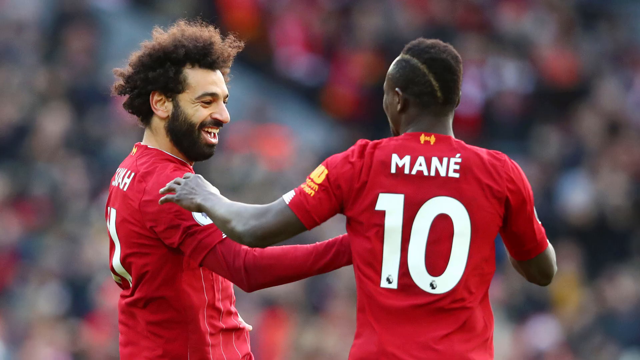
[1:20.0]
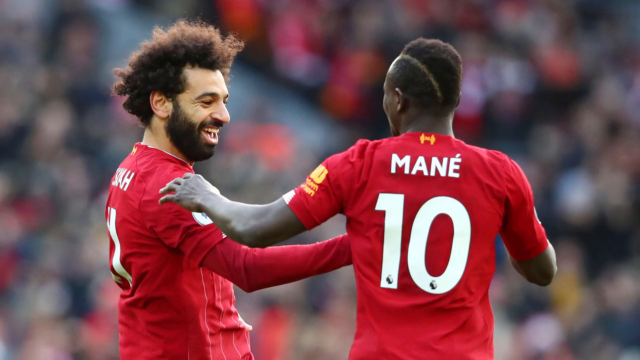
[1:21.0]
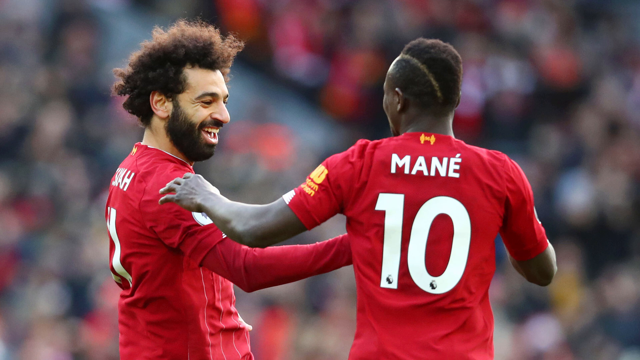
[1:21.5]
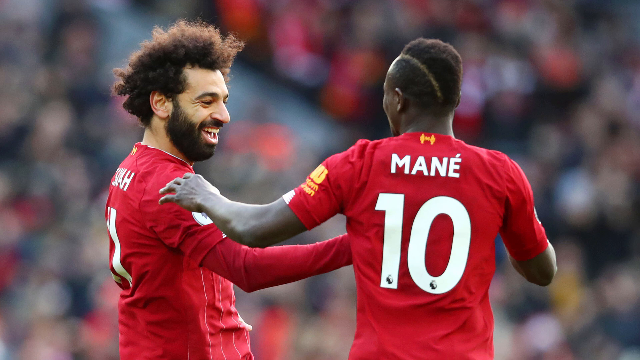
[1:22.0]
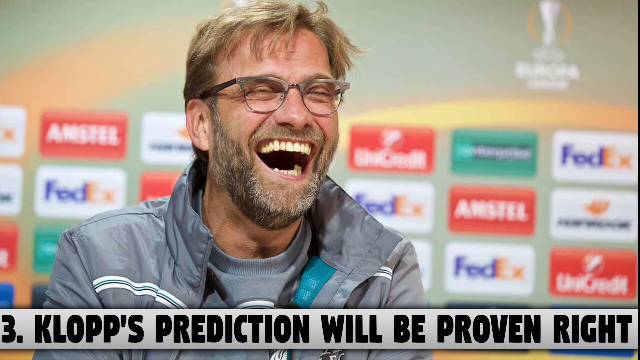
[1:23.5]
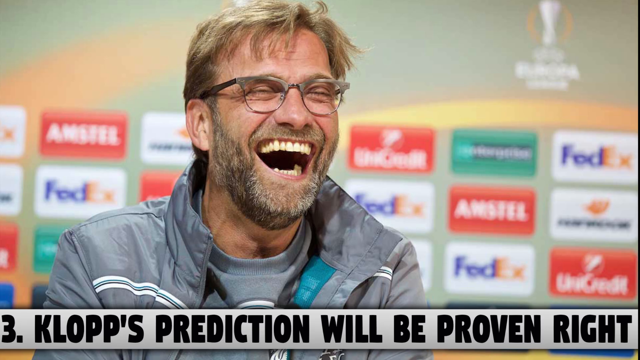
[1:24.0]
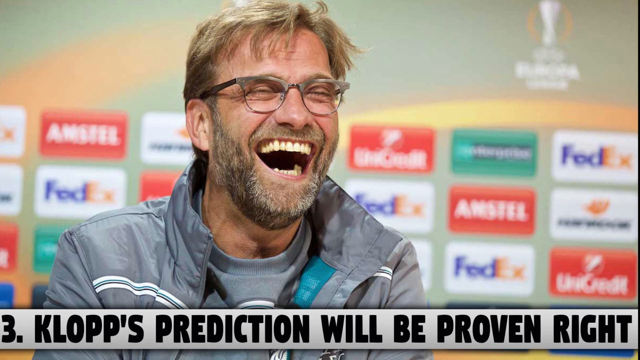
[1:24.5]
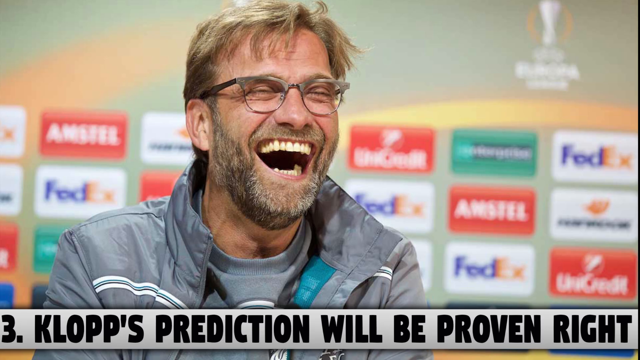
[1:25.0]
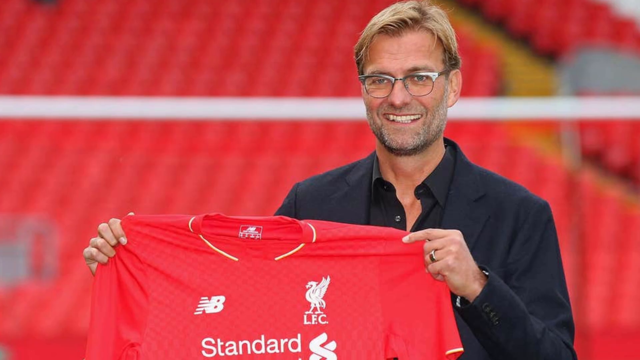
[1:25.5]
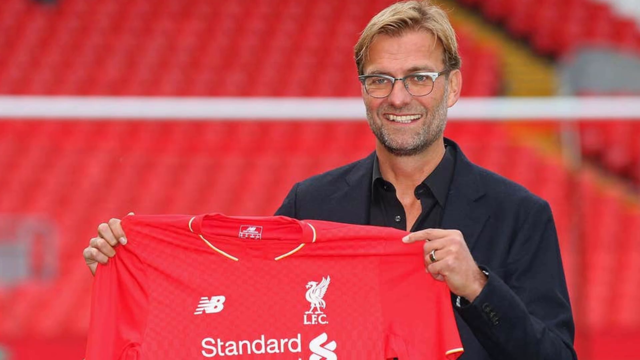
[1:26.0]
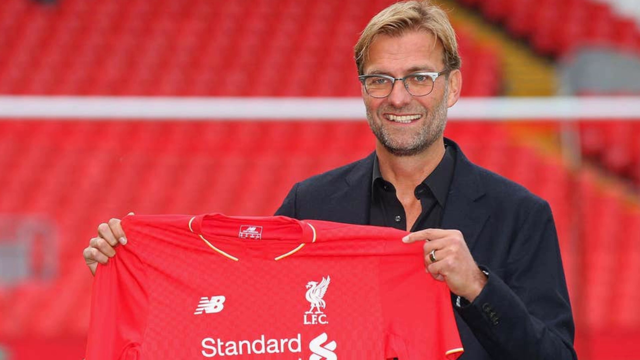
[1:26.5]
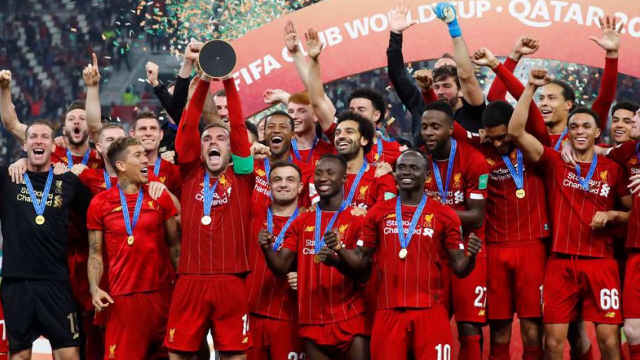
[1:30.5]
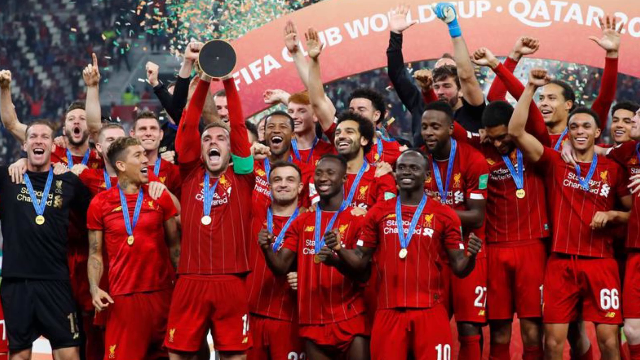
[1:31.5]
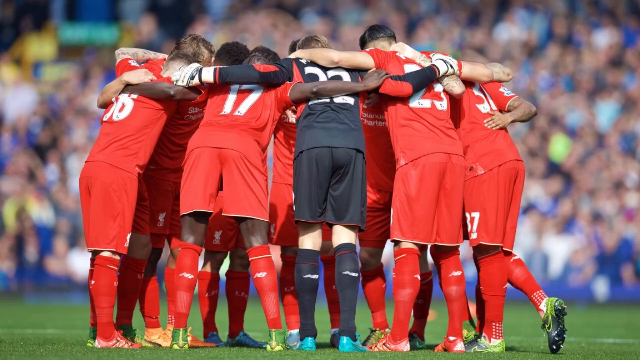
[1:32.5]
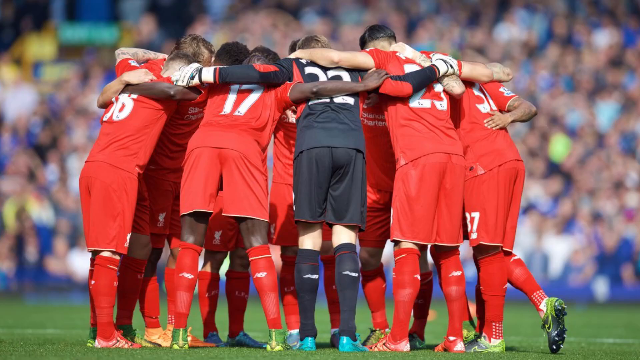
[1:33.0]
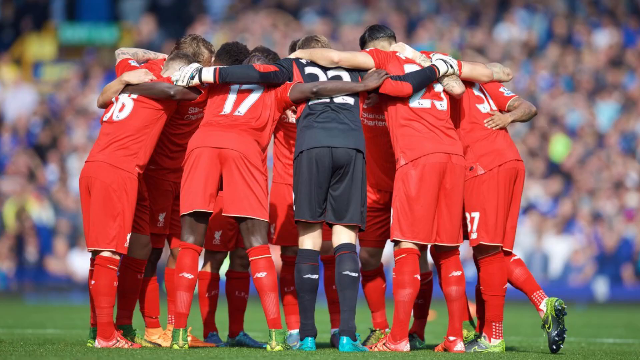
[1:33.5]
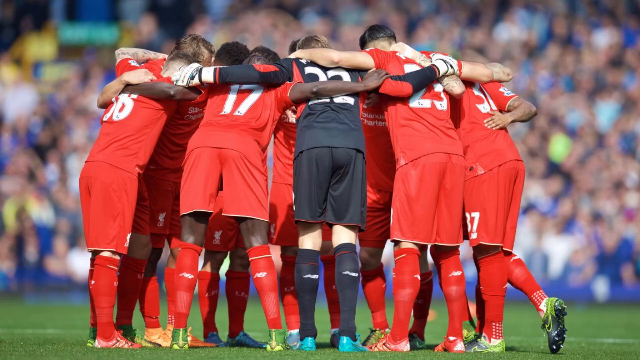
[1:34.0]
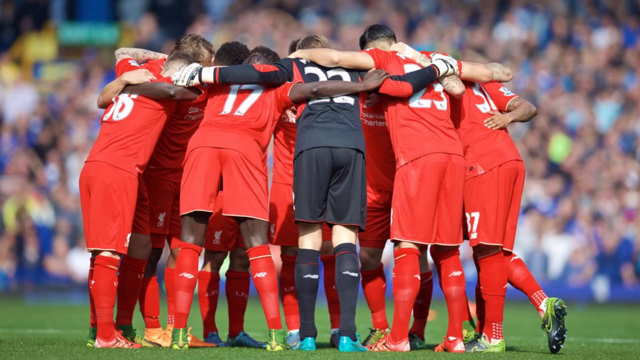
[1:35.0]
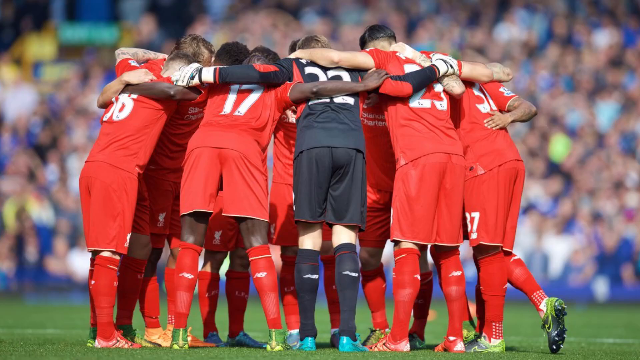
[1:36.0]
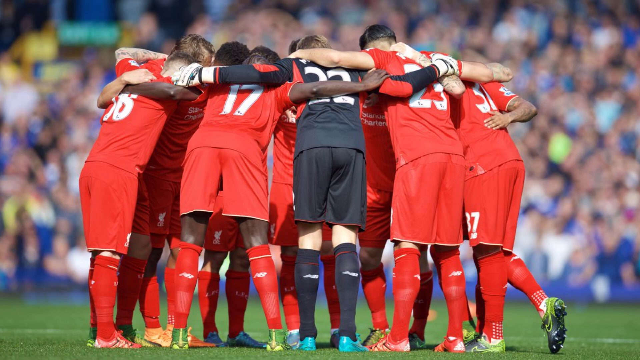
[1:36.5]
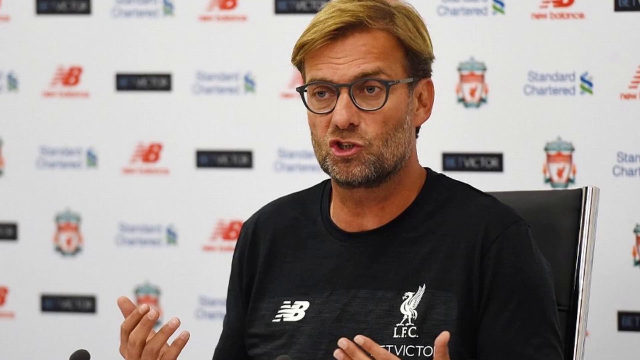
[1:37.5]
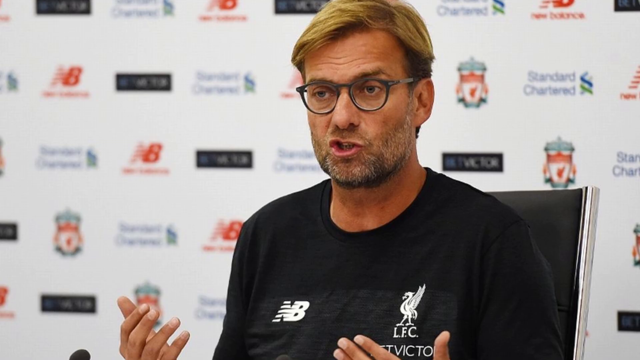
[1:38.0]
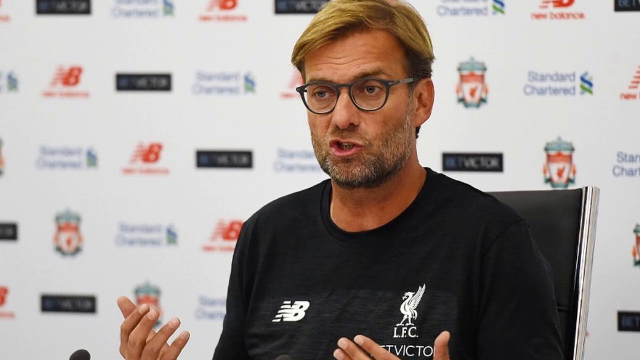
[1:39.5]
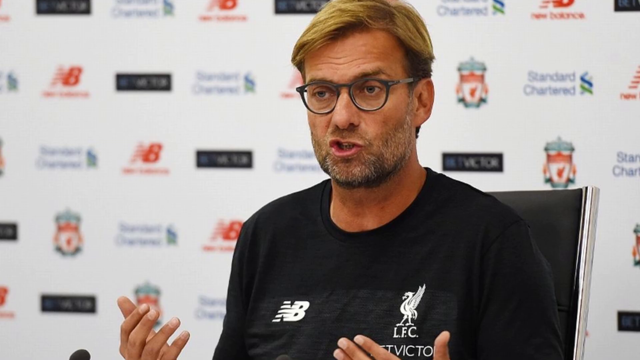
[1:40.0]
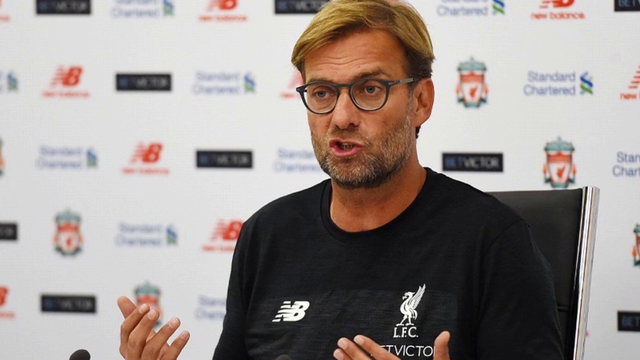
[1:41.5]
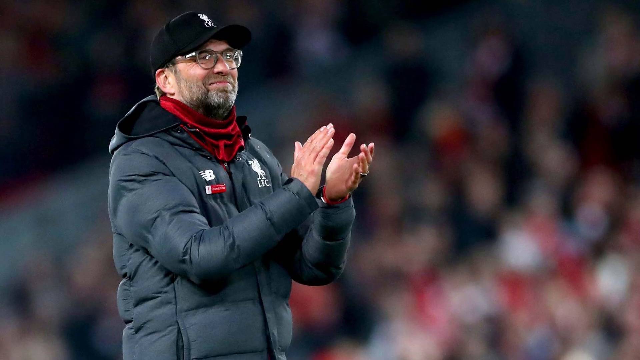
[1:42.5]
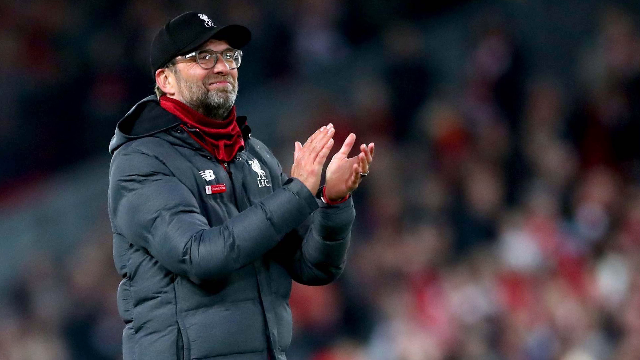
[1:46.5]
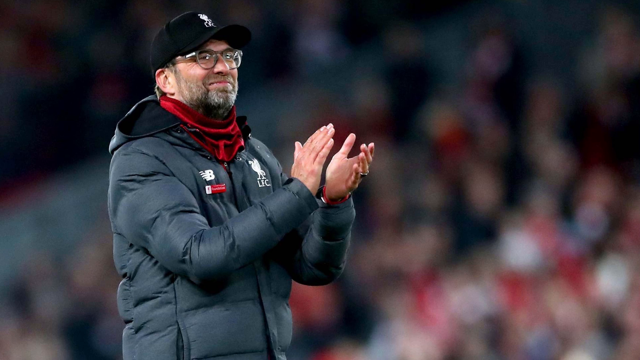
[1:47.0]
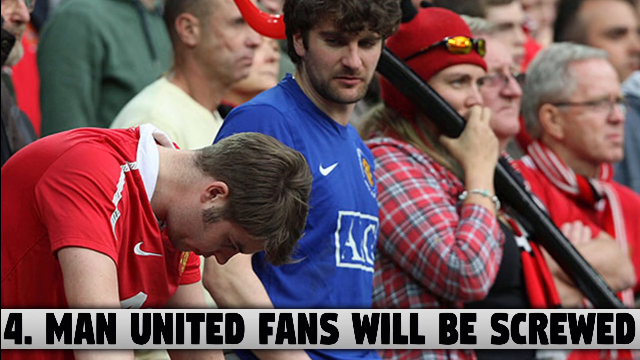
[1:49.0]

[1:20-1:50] Two men, presumably soccer players, wear red tops with white text and numbers on the backs of their shirts. The man on the right has the number 10, with the name "MANE" above it. The man on the left has very wild-looking curly dark hair and a very thick beard and is smiling at the other man, who looks to be African American or at least of African descent. The scene changes to a Caucasian man with blonde hair and a pretty thick beard that is dark with gray in it and blonde on the mustache. He wears a gray jacket with a gray shirt underneath and smiles very big with his mouth open and his eyes squinted. The scene changes to a similar-looking man, possibly the same one: blonde, with a slight, partially gray beard, wearing a black jacket with a black shirt underneath. He holds a red jersey in his hands that says "NB" on the left and "LFC" on the right, with some kind of bird or dragon over it.